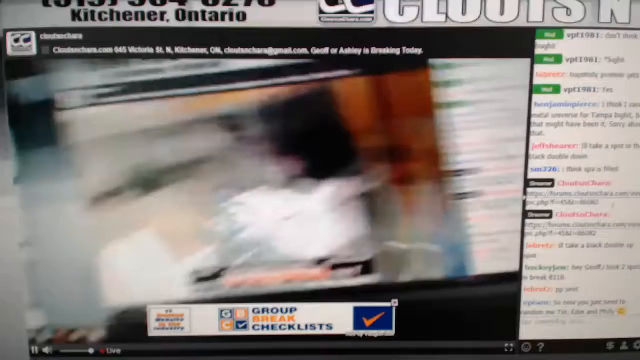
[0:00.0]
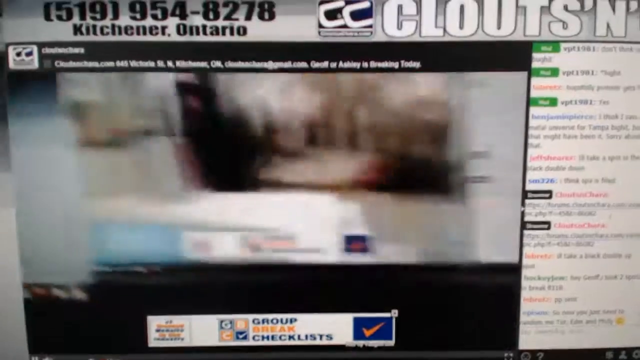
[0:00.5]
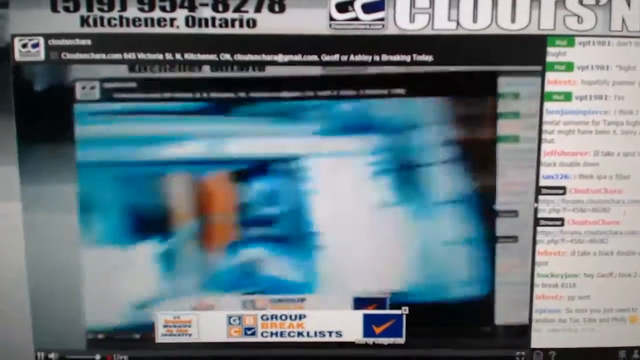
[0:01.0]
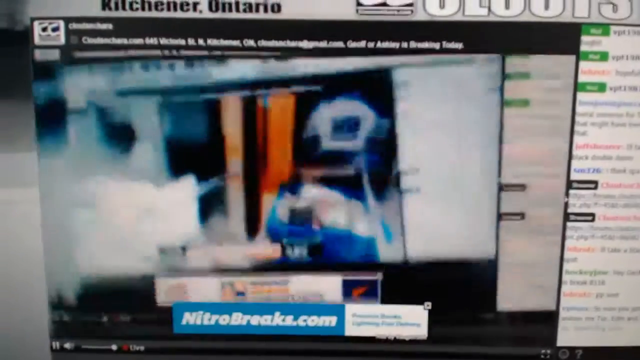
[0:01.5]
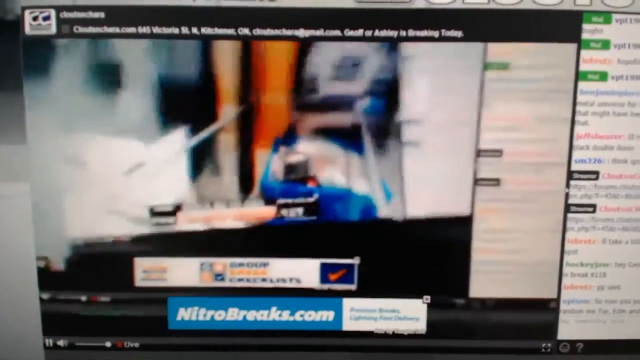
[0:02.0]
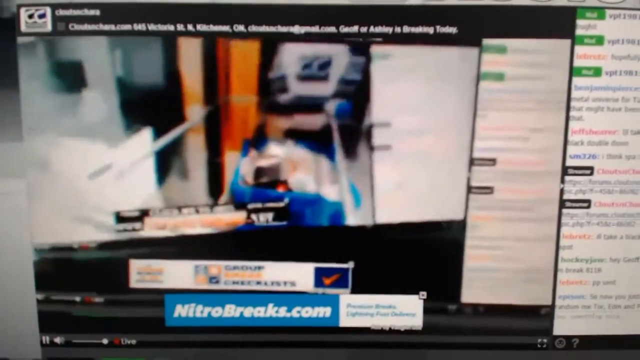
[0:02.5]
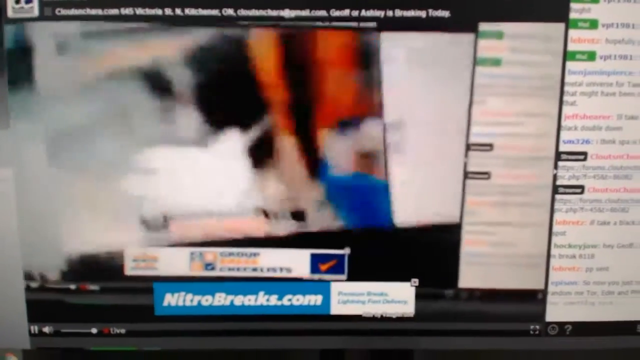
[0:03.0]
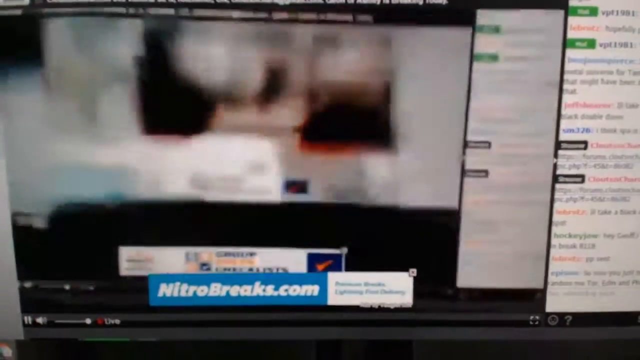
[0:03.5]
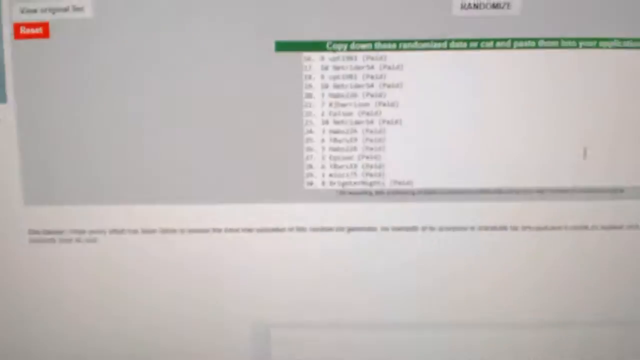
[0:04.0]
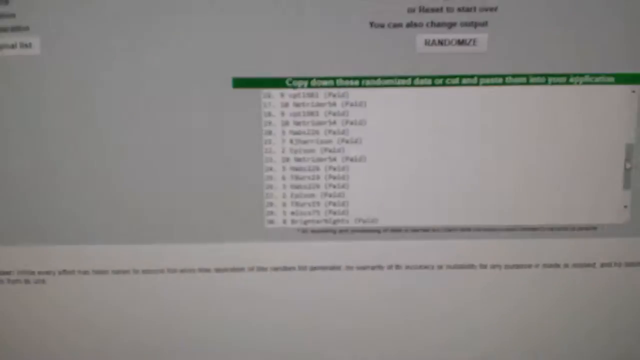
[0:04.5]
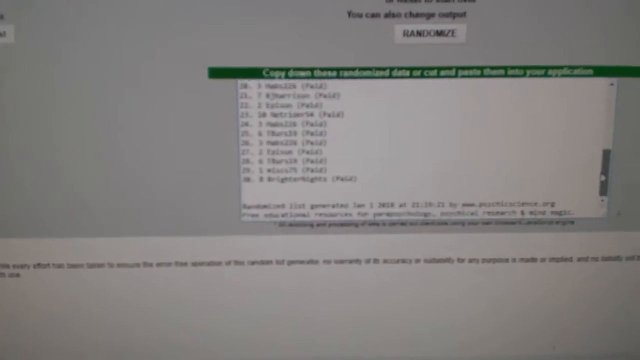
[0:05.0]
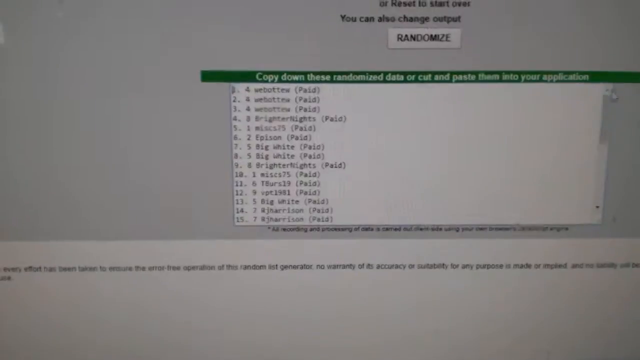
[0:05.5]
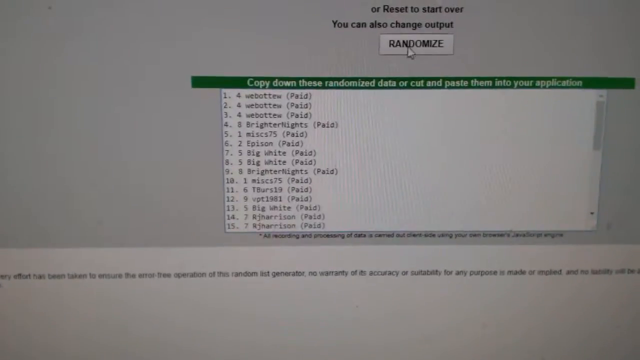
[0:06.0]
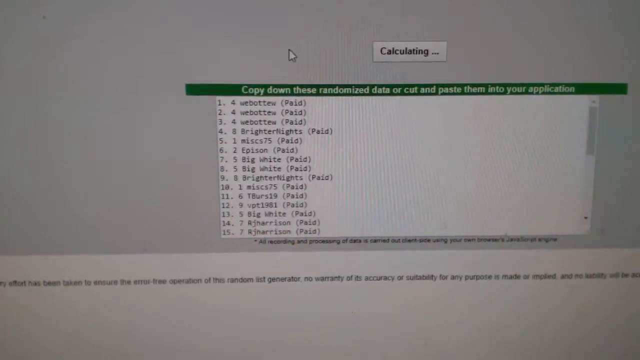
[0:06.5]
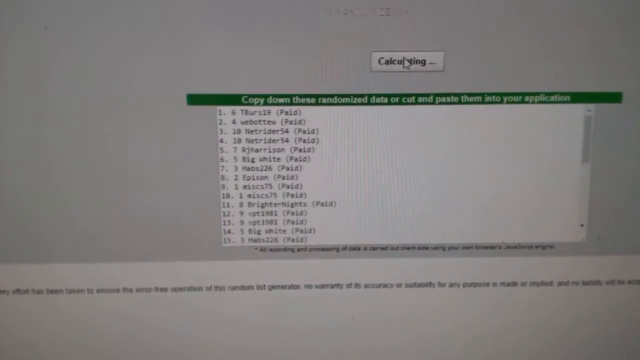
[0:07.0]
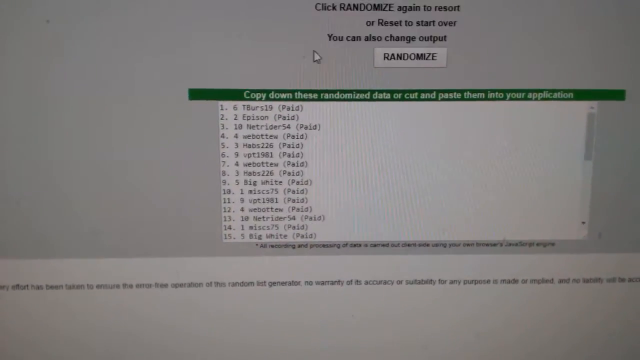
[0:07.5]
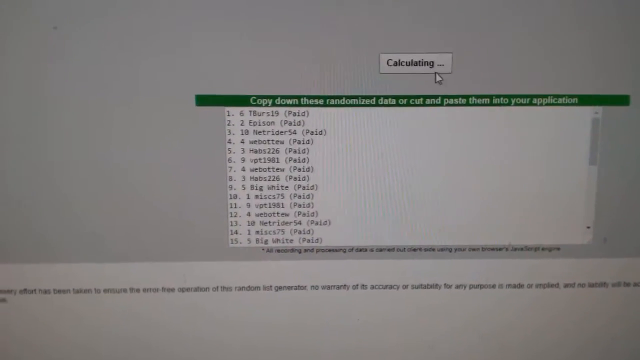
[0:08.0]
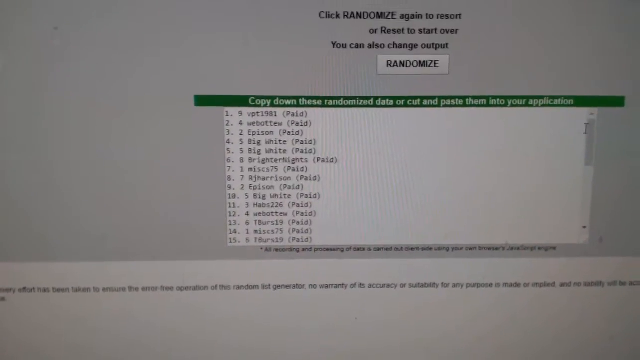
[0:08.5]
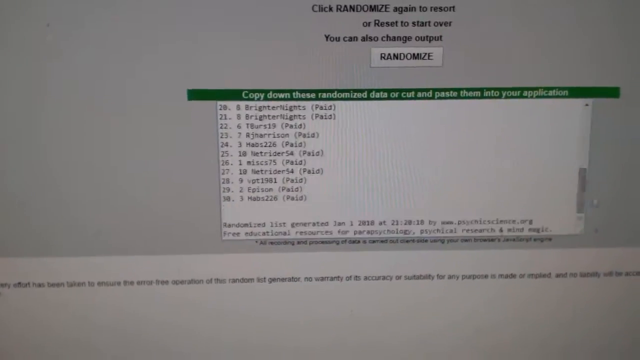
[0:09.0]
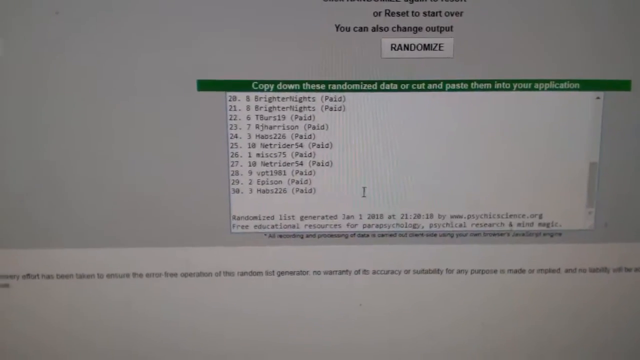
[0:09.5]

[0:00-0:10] The scene is somewhat confusing, with what seem to be screens within screens within screens on what looks to be a monitor, and it is hard to see what is going on. Then a blurry image of a monitor appears, as if someone is recording it with a camera rather than screencasting it. A screen has a green strip on it, and the strip says "copy down these randomized data or cut and paste them into your application." What look to be some different functions appear. The person clicks a button that says "calculating," and it looks like it is somehow randomizing all of the different text options.